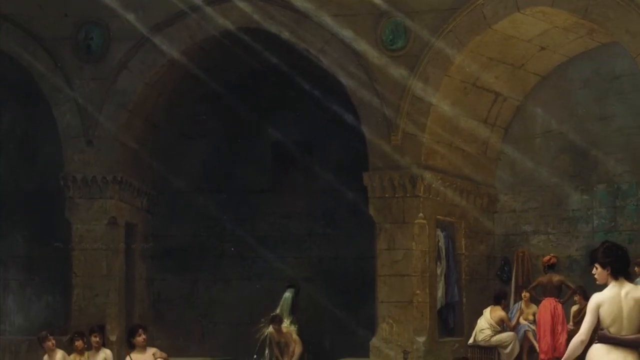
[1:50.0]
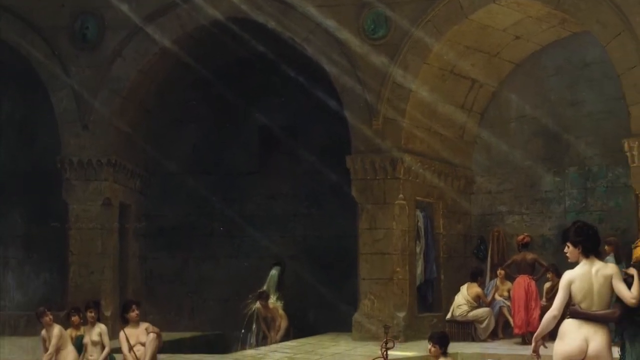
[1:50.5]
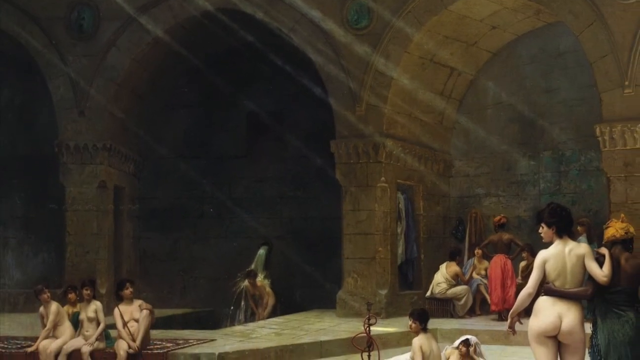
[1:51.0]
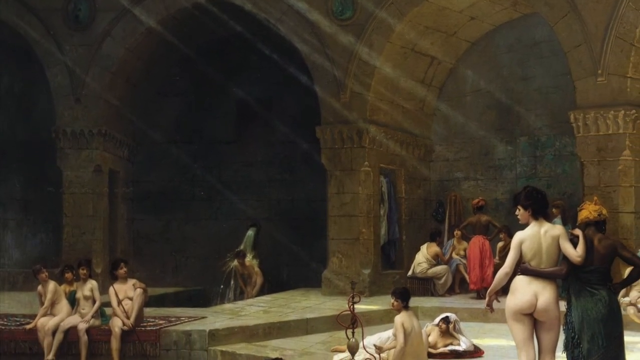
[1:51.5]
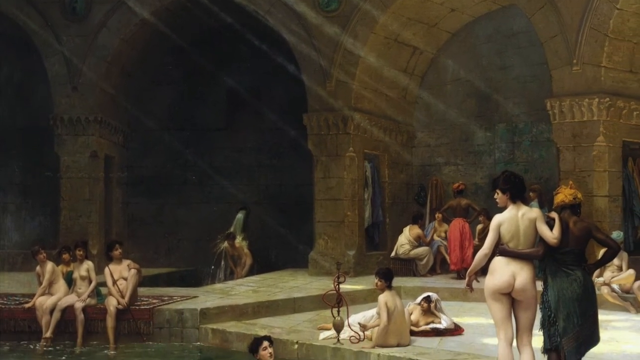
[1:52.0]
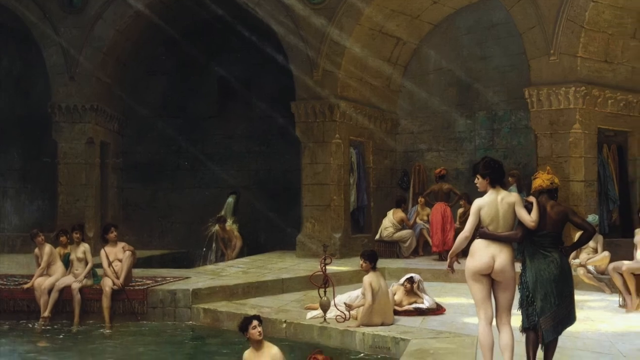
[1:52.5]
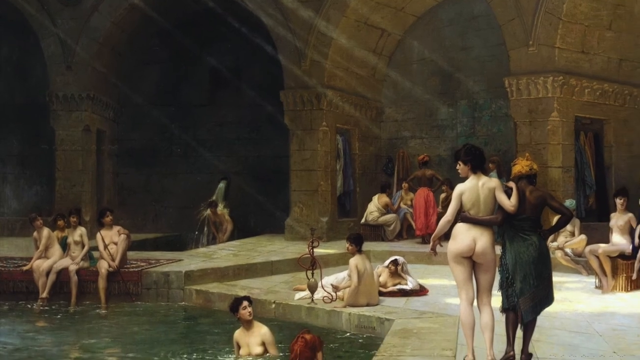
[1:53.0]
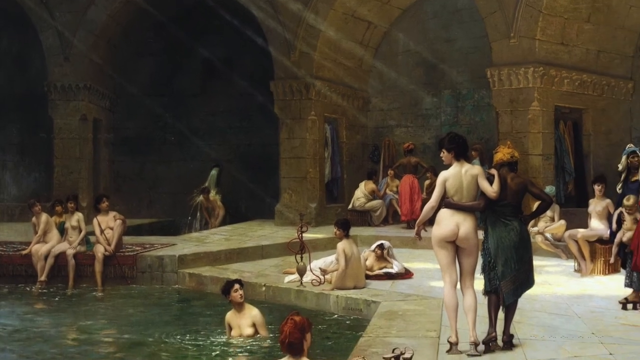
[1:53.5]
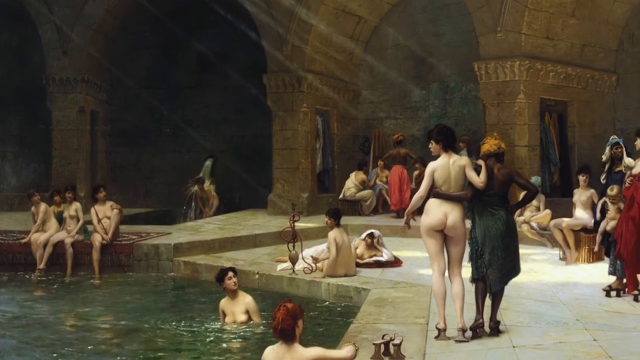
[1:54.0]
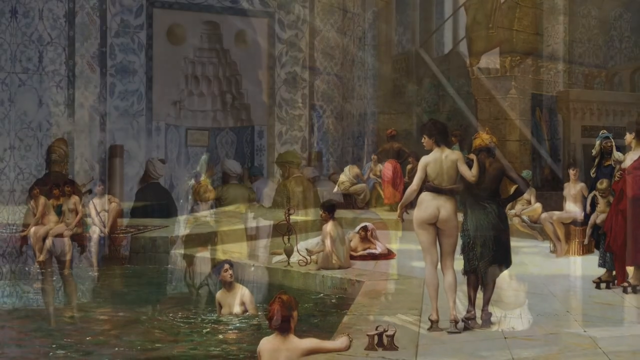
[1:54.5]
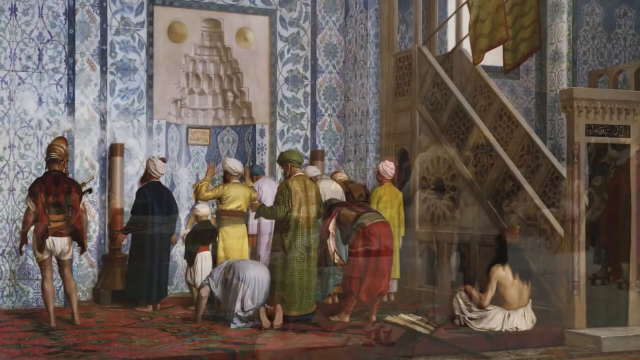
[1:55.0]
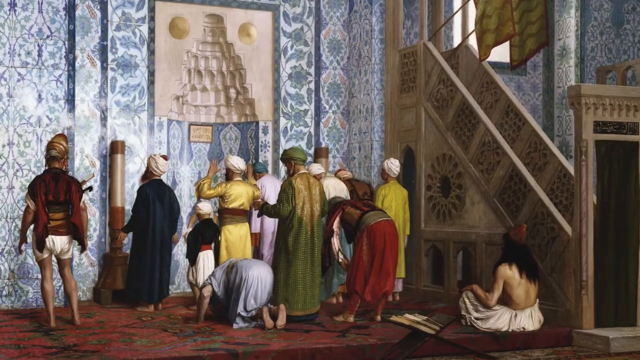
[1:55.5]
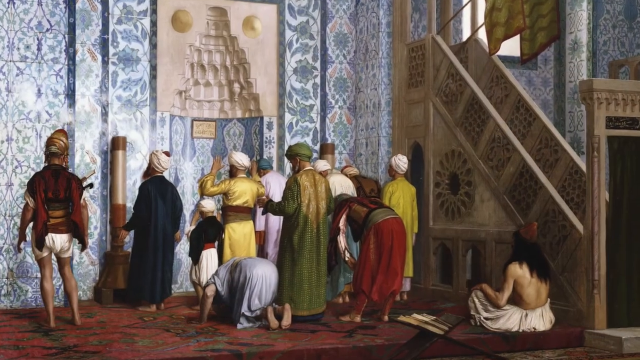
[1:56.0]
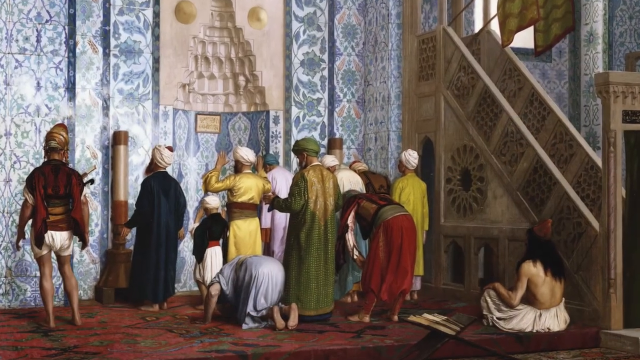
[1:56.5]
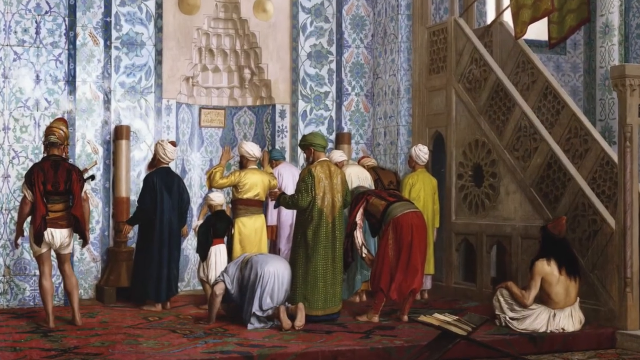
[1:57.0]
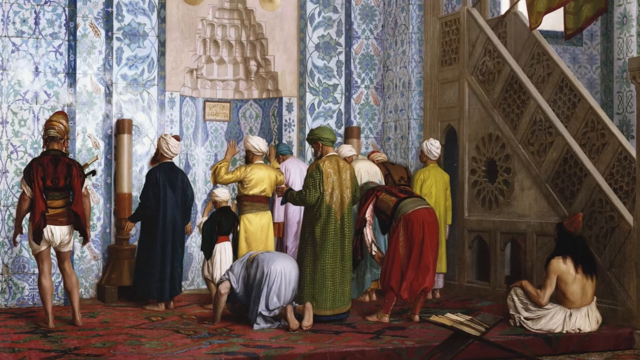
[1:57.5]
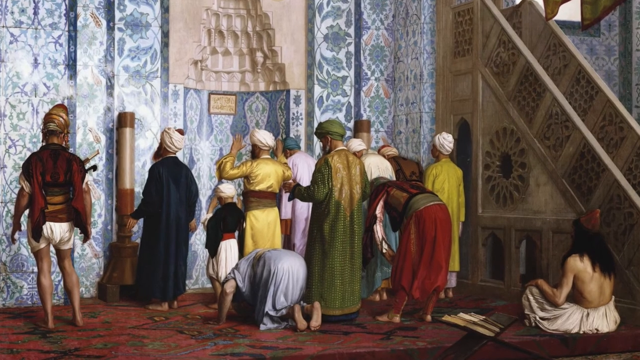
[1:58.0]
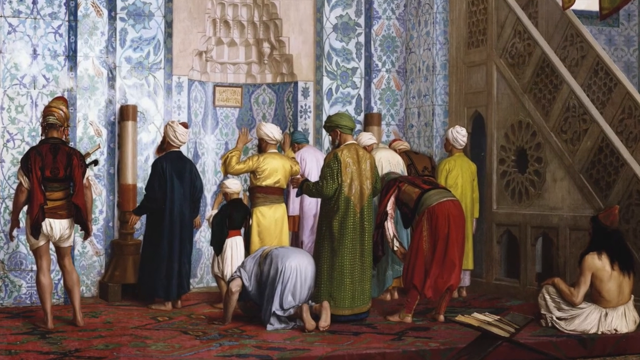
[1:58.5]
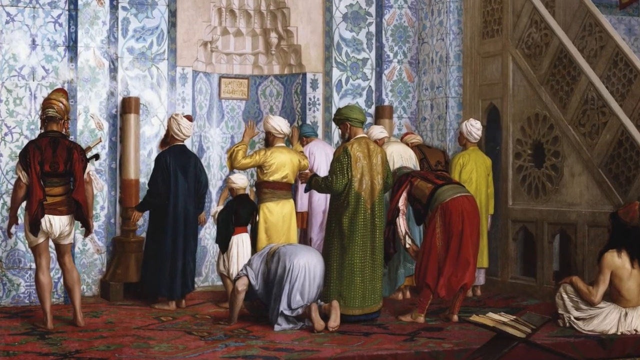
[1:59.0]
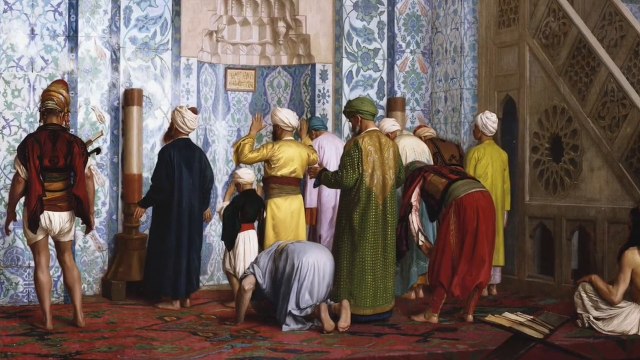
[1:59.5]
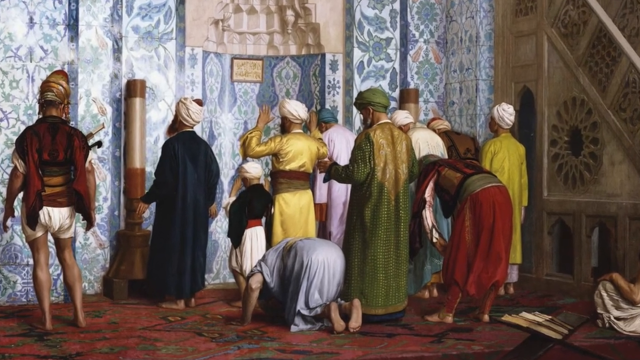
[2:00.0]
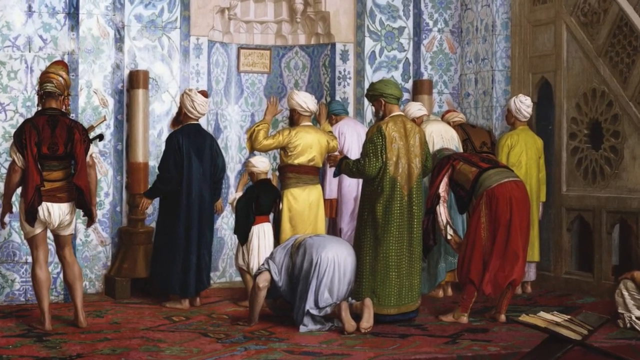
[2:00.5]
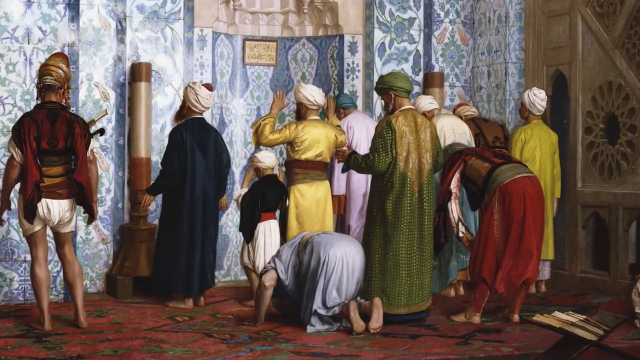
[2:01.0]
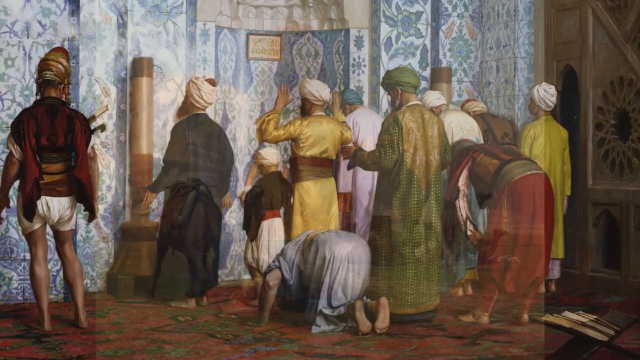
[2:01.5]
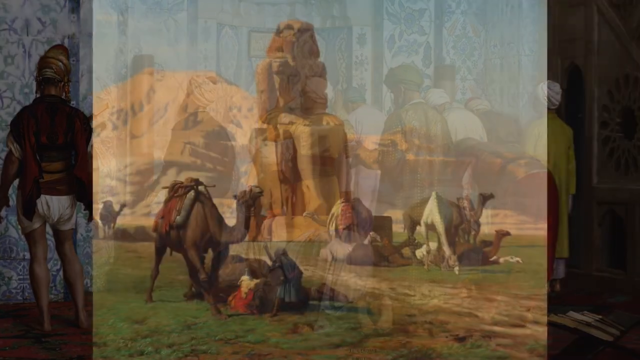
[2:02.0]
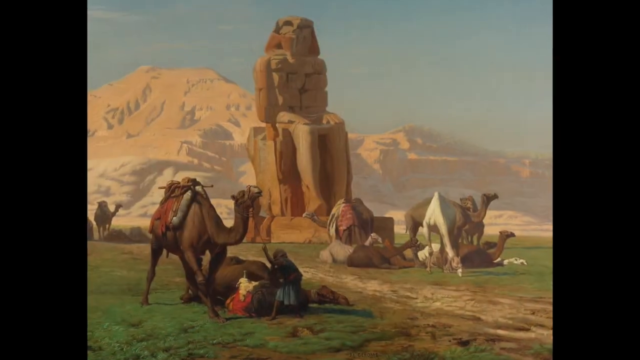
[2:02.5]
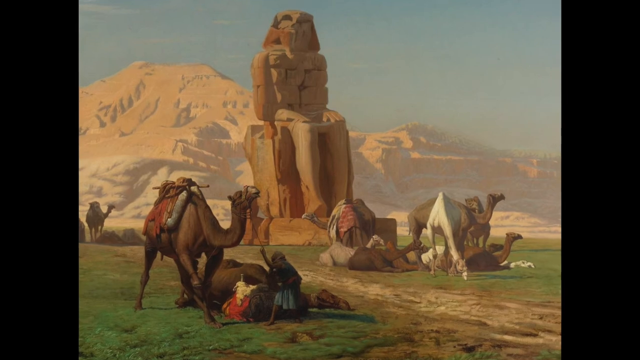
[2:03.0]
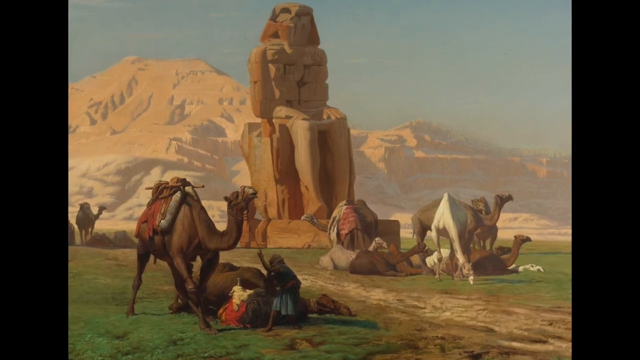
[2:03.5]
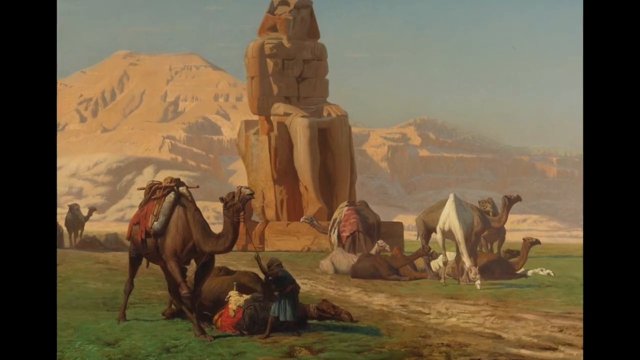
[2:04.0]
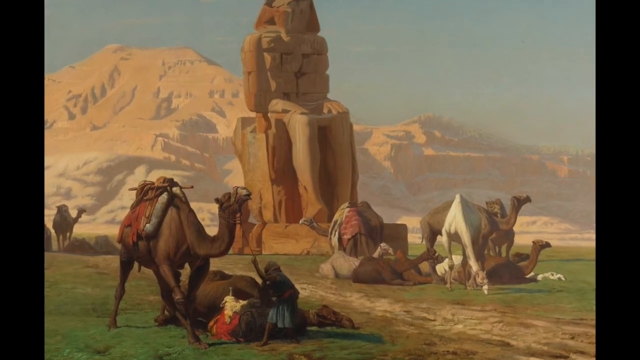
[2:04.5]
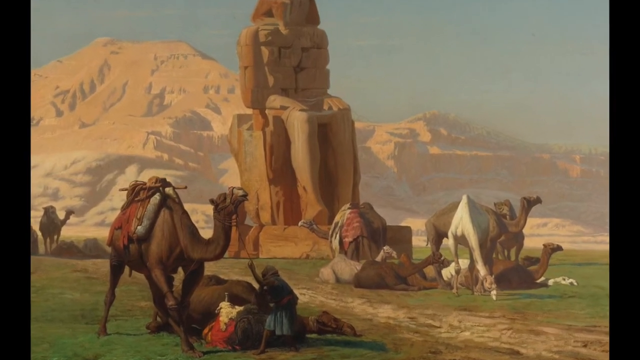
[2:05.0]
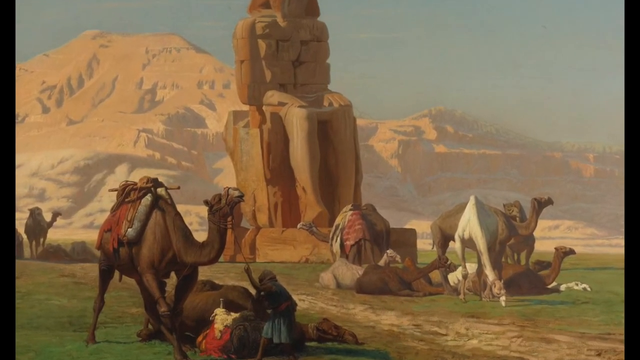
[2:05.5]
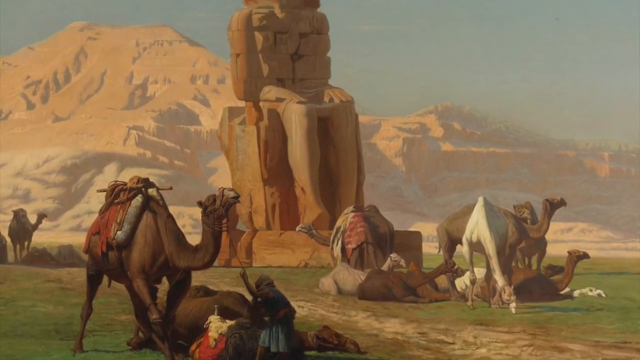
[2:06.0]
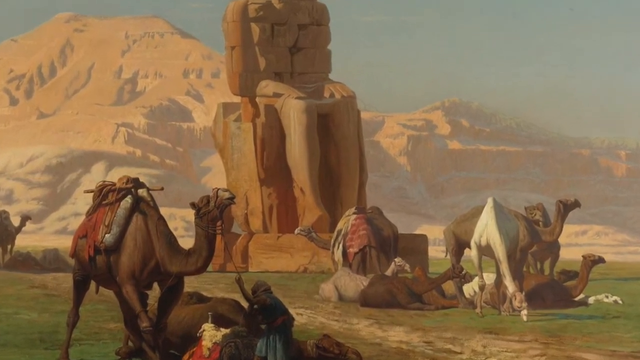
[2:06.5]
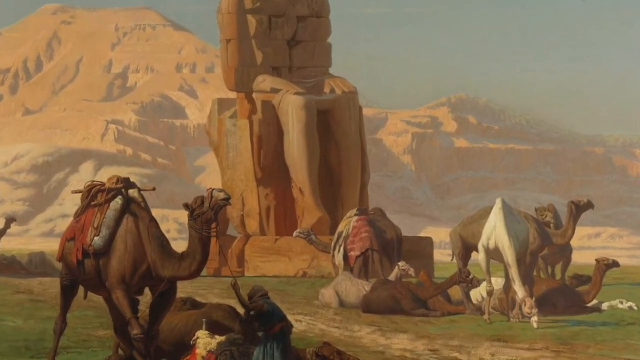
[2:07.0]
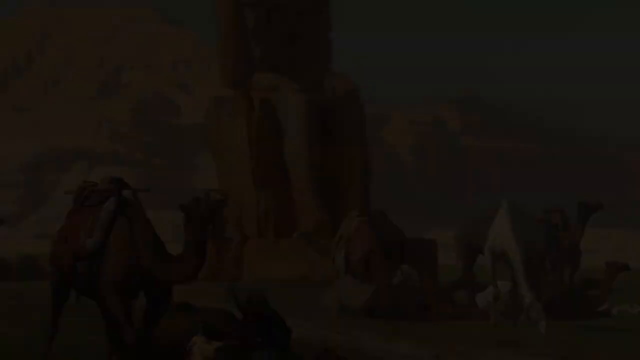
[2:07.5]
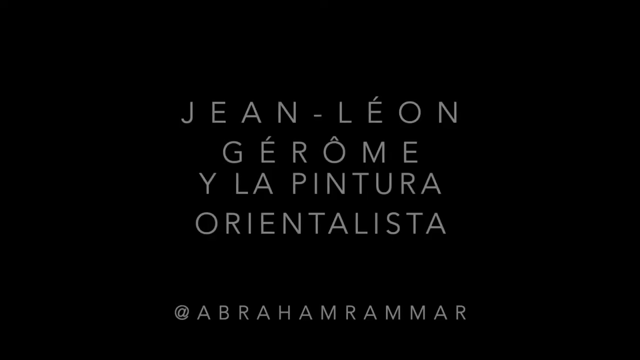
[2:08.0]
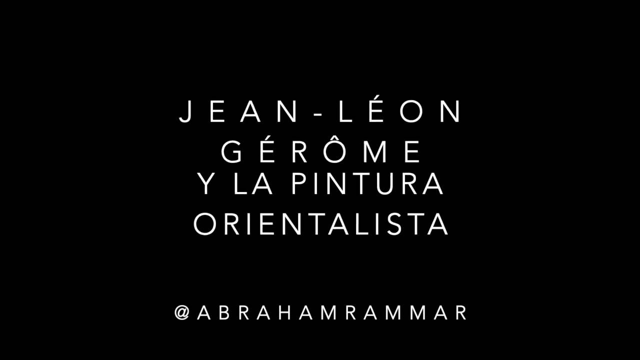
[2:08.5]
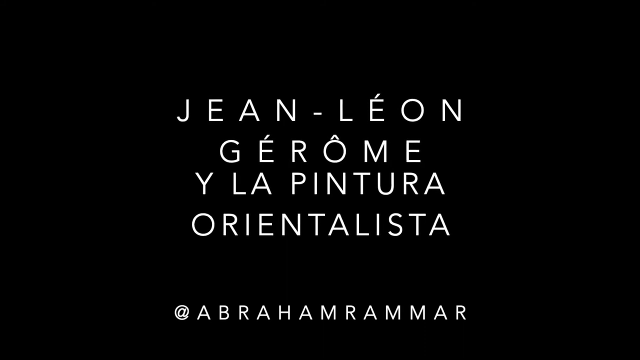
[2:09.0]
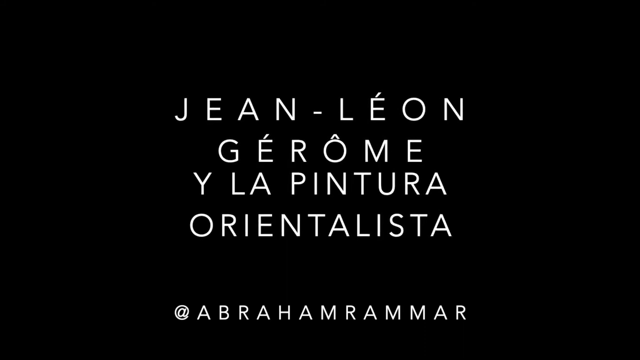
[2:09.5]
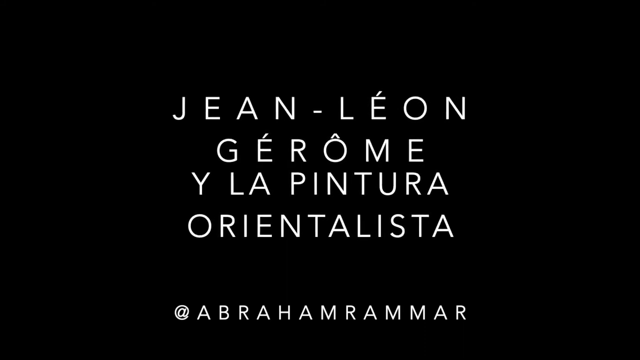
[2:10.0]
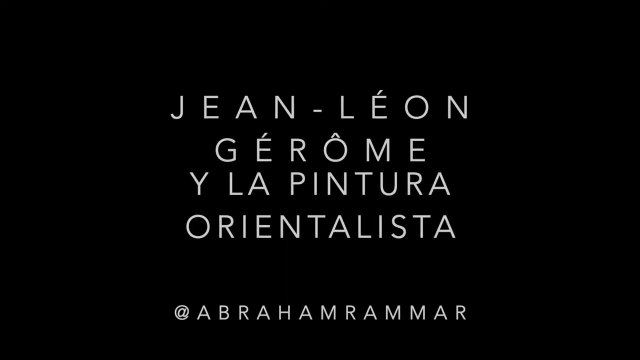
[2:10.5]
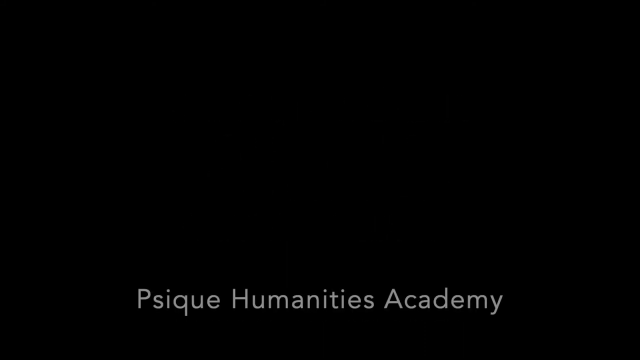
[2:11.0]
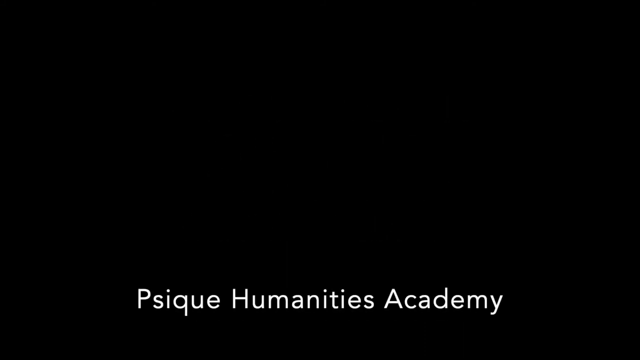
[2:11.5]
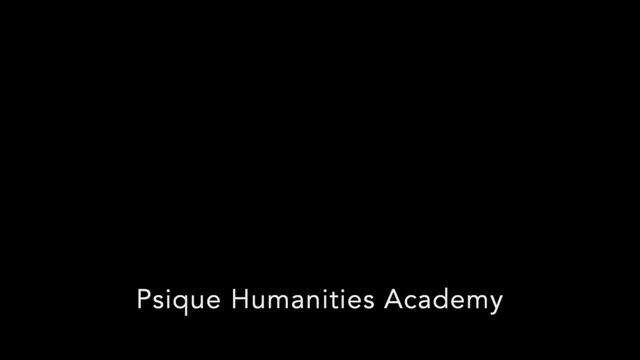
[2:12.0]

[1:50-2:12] The camera pans in on a group of individuals at what seems to be an older-style gathering, possibly an adult party, where a person who looks kind of naked-ish is being let out. It then pans in on a group of individuals who look like they are making some type of prayer, standing next to a wall and facing it, with an unidentifiable object above on the wall. Most of them wear turban headgear and long garments, though some do not have long garments below, and one individual has no top. The view then pans out to something like a Sphinx-like painting, with camels in the surrounding area relaxing and looking like they are grazing, possibly waiting for people to come out of the temple; no one is around them at all.